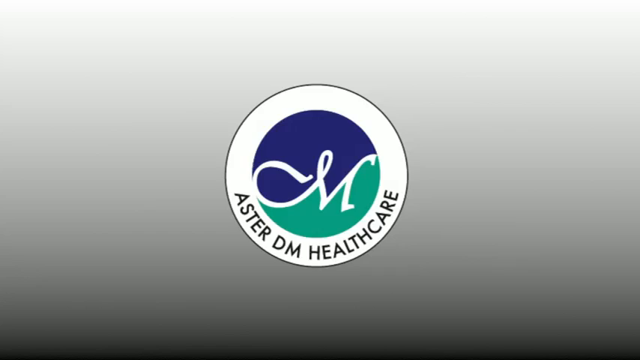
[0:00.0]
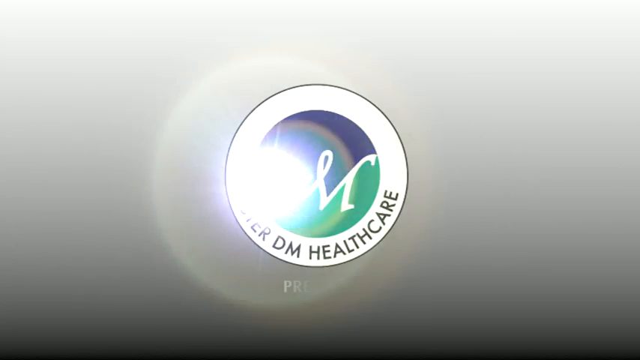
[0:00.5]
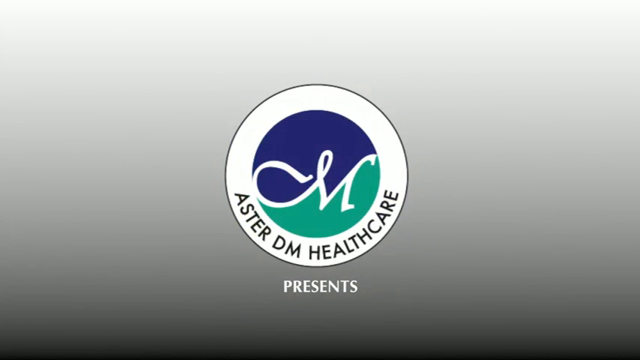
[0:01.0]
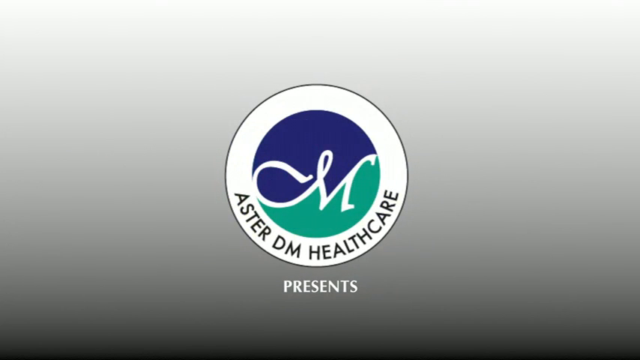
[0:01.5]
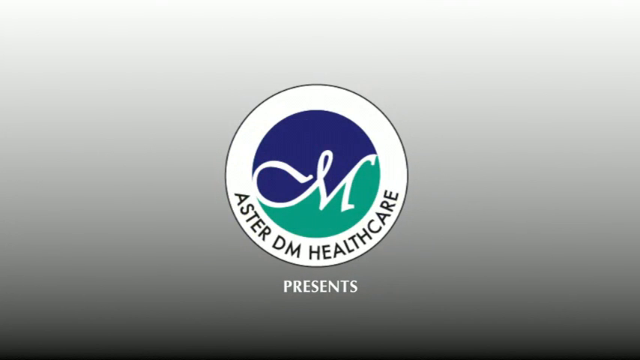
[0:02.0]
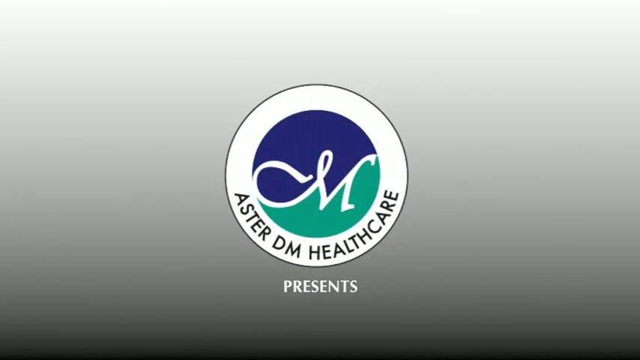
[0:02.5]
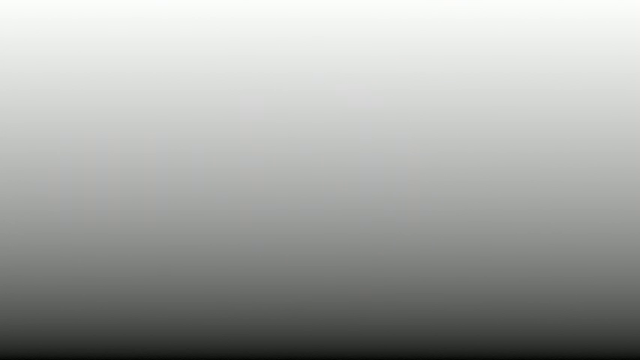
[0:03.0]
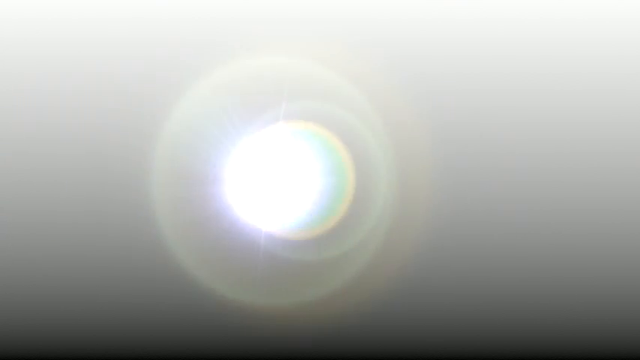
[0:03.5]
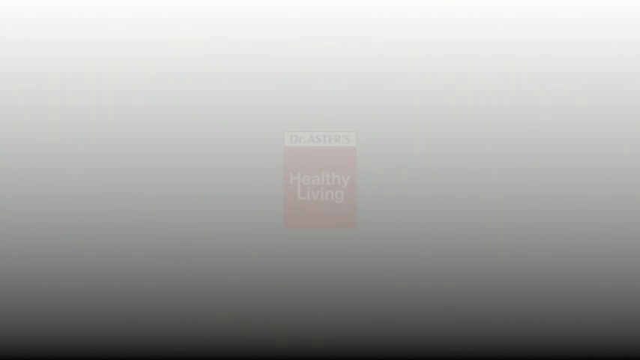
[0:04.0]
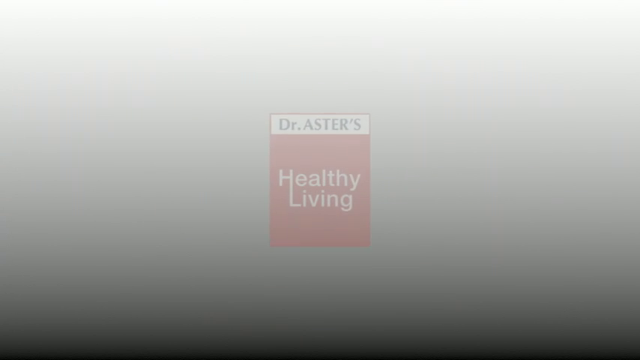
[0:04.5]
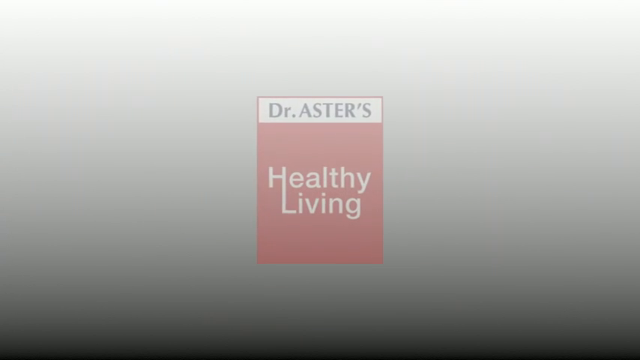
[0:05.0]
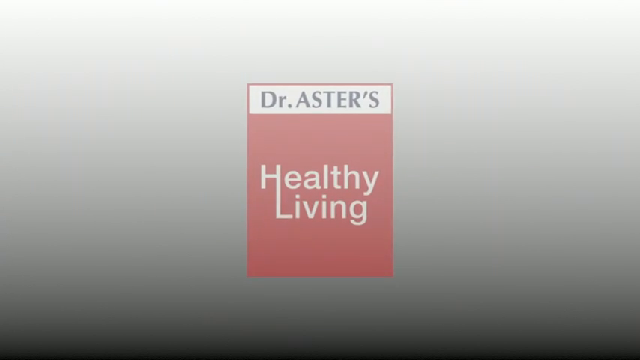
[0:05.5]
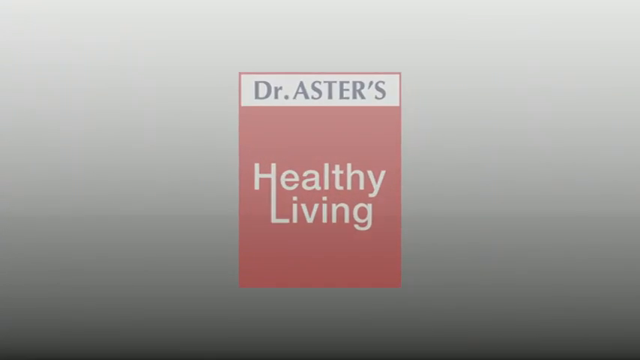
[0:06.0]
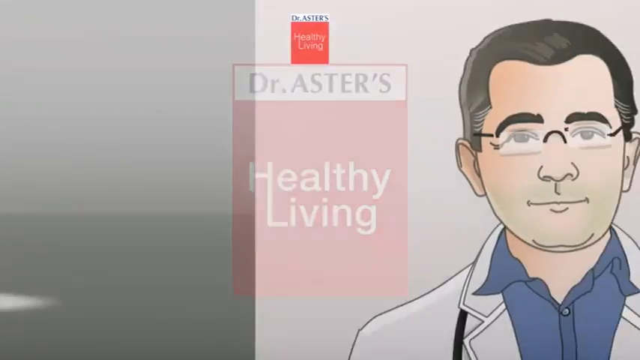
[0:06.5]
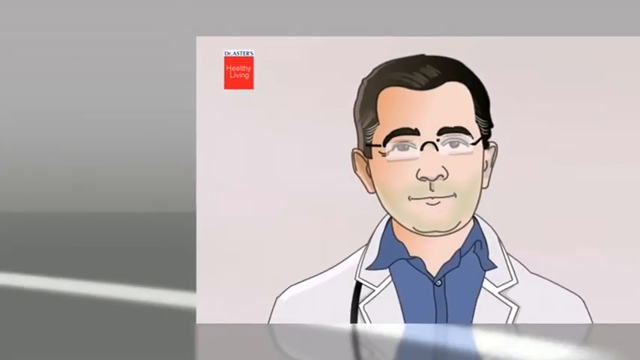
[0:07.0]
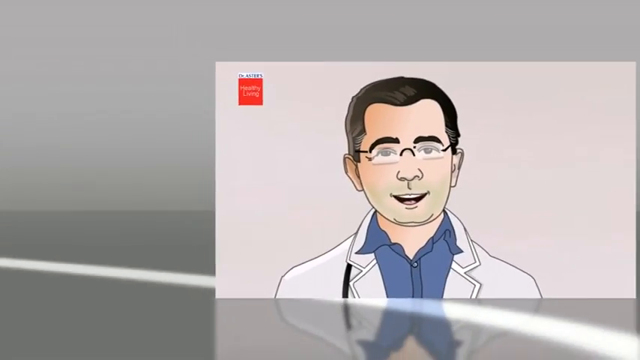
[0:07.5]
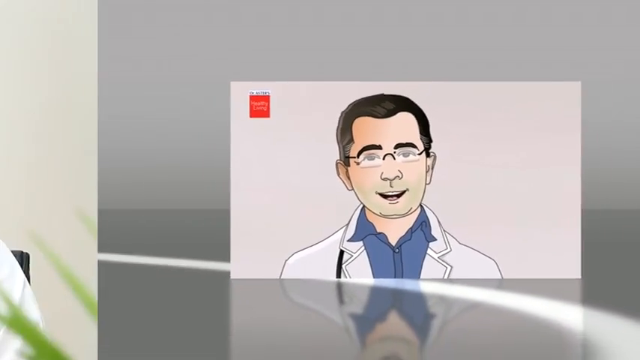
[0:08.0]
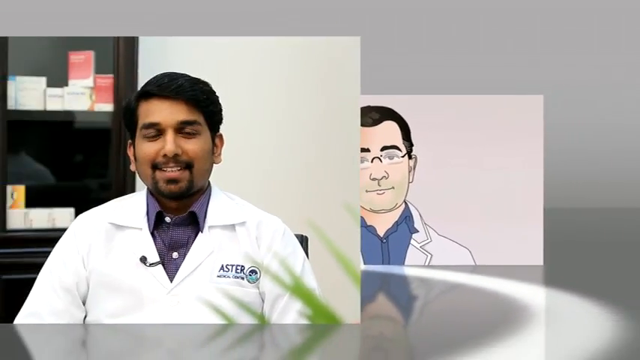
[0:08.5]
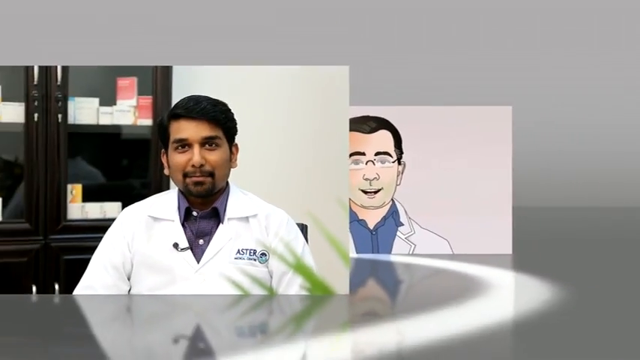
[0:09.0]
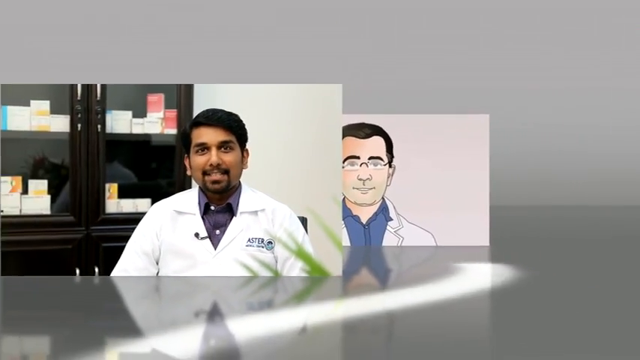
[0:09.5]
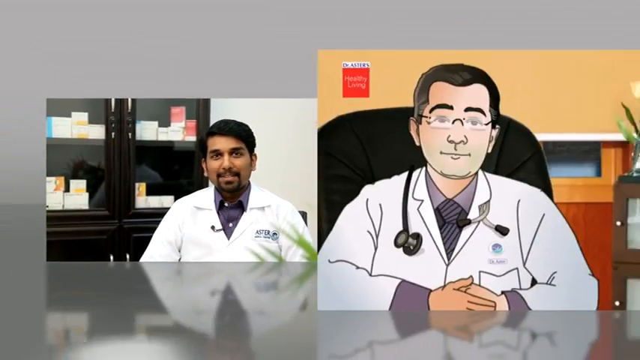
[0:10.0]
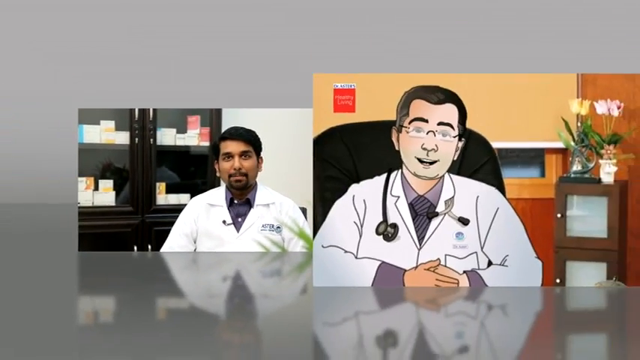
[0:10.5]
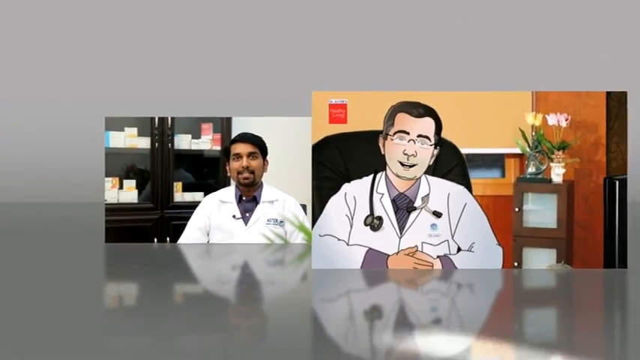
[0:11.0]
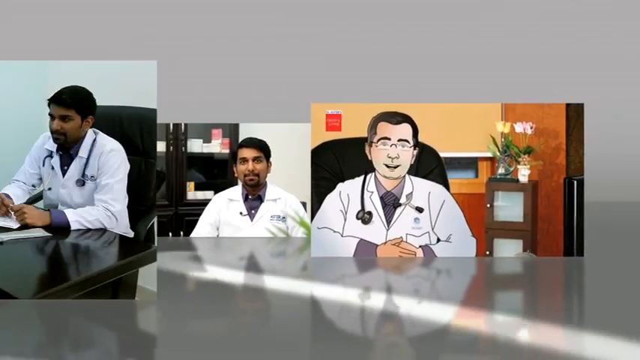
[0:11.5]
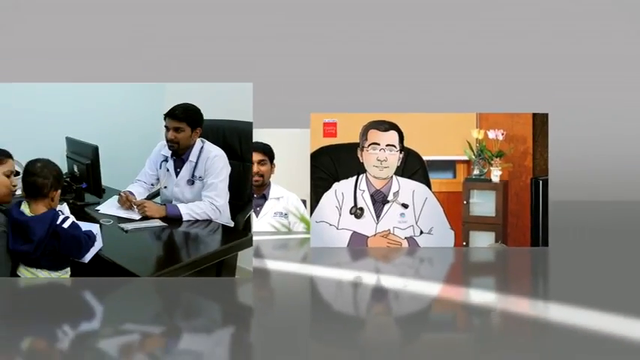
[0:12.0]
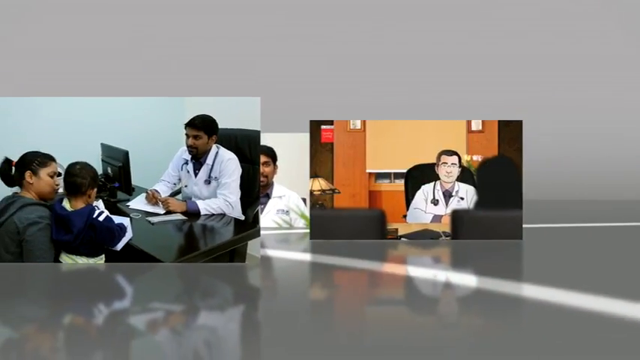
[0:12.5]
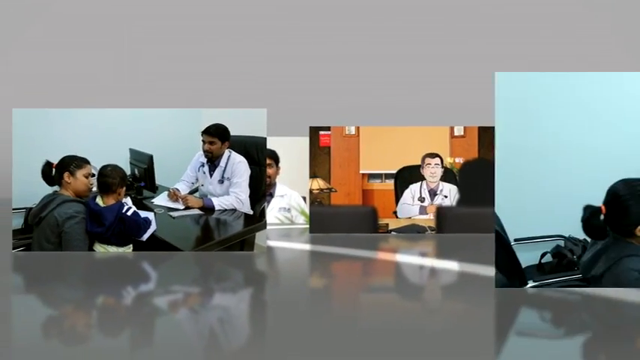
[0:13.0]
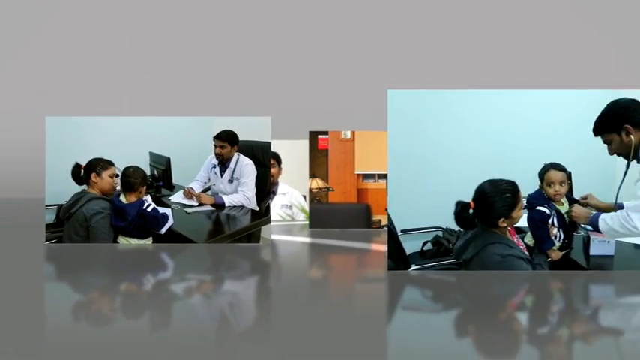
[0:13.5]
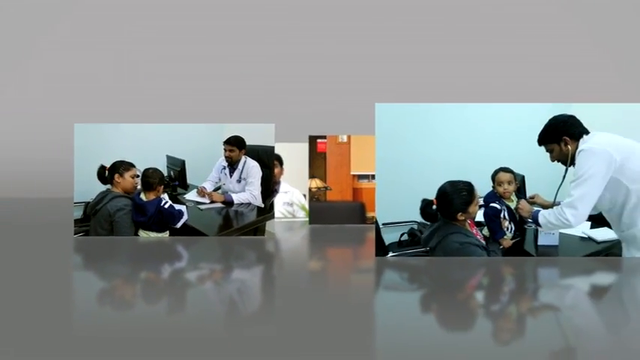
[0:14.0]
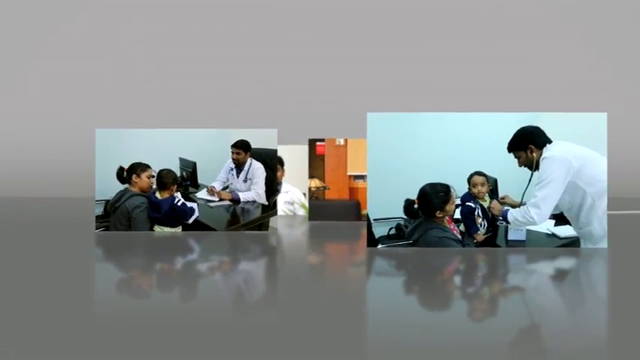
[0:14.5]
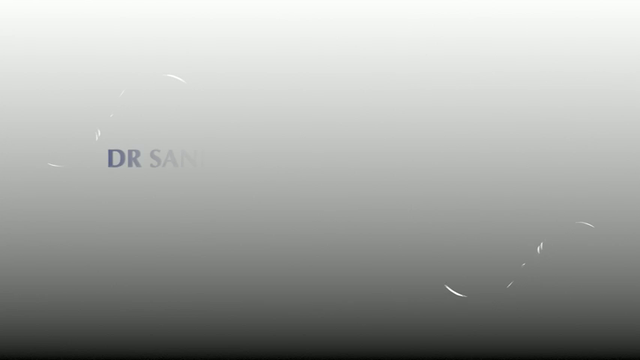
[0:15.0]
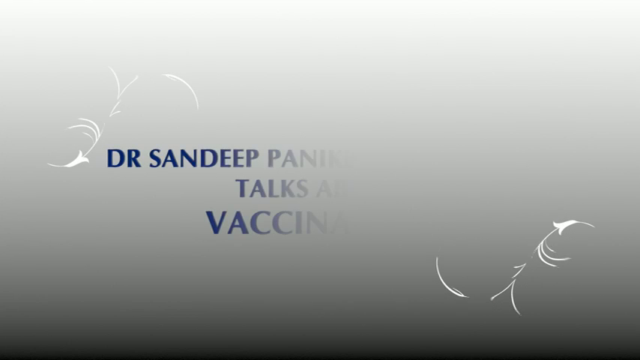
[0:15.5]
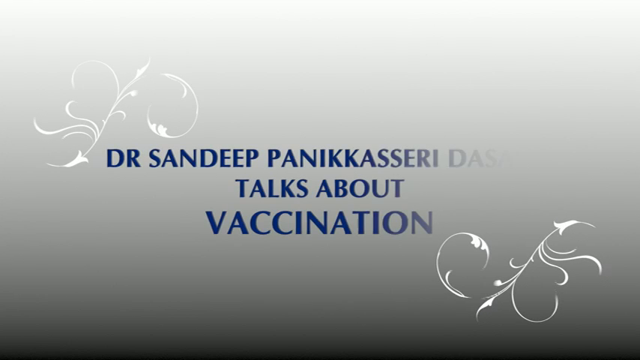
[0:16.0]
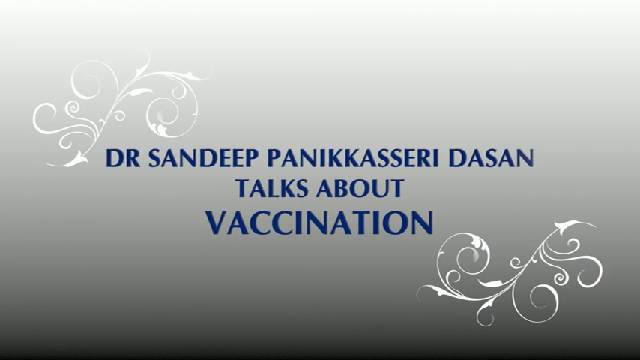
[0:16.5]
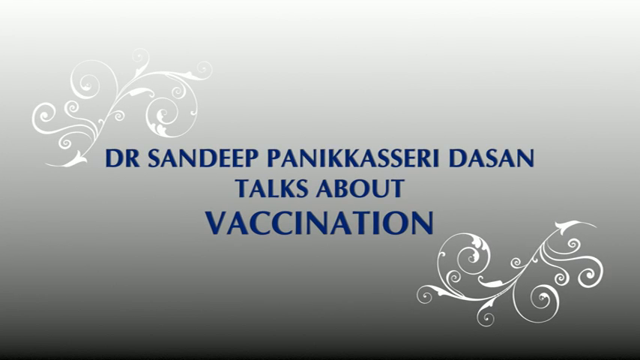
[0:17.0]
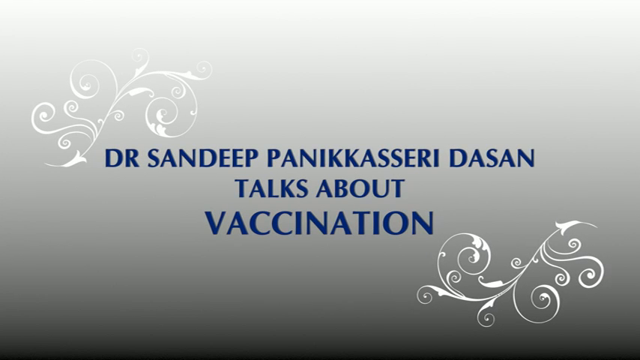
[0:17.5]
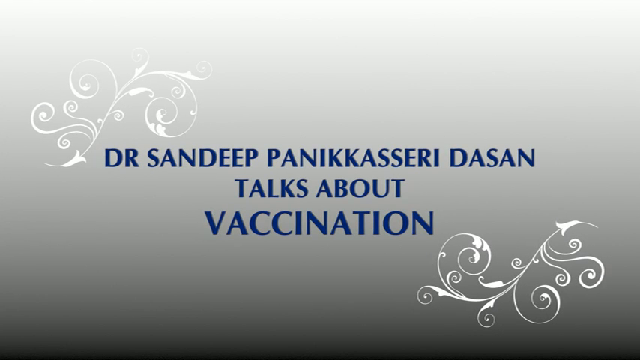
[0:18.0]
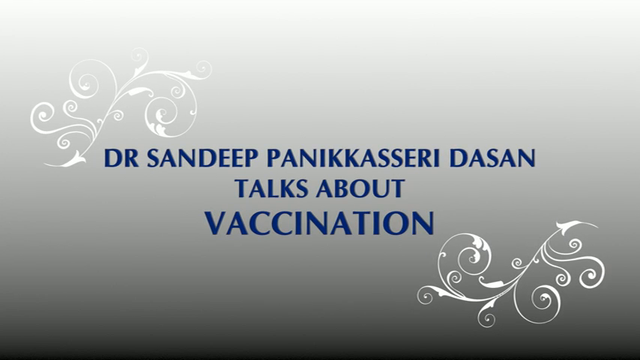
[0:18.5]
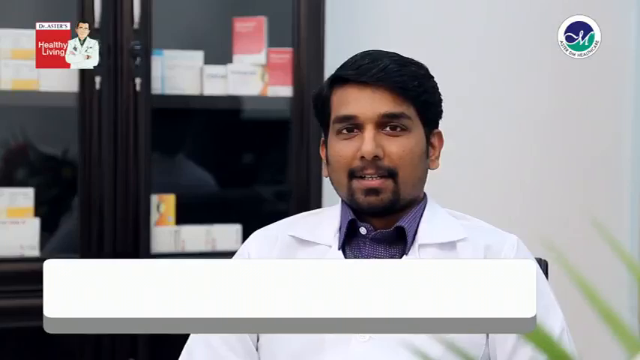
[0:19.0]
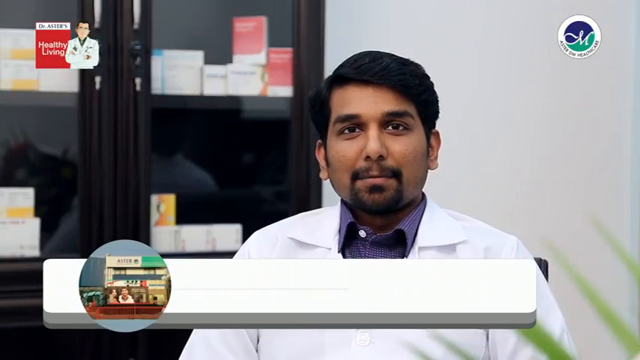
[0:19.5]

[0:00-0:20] On a gray screen, a circle appears in the middle; the center of the circle is half blue and half green with a white letter M in it. Underneath the M, text reads "ASTER DM Health Care," and beneath the circle the word "PRESENTS" pops up. A red square then appears in the middle of the screen reading "healthy living," with "Dr. Astor's" at the top of the square. A series of pictures follows: a cartoon doctor, a real doctor, a cartoon doctor, a real doctor, and another picture. Each picture moves into the middle of the screen and gets smaller until it disappears. The screen turns gray, and text in the middle reads "Dr. Sandeep Panikkeri Dasan talks about vaccination."